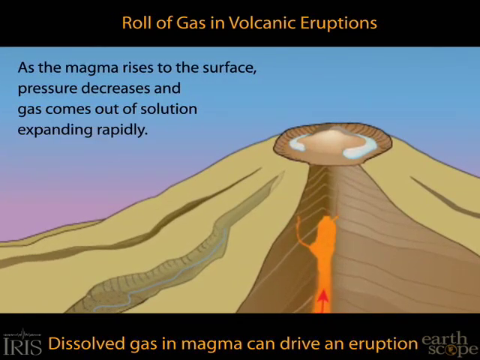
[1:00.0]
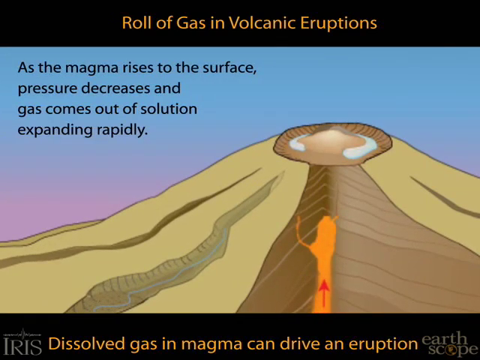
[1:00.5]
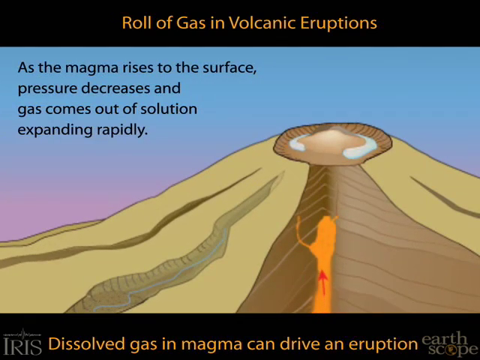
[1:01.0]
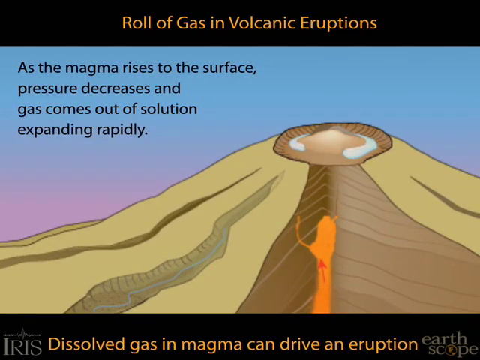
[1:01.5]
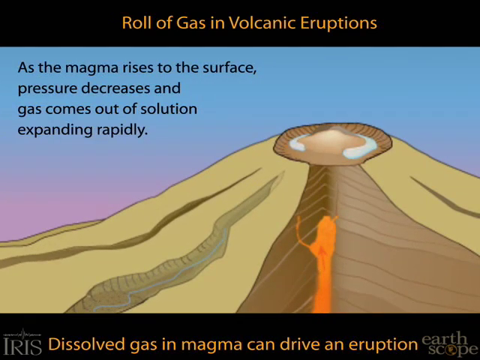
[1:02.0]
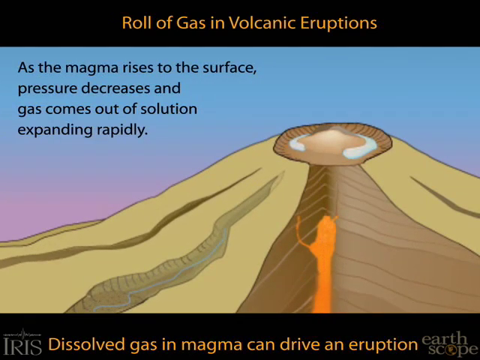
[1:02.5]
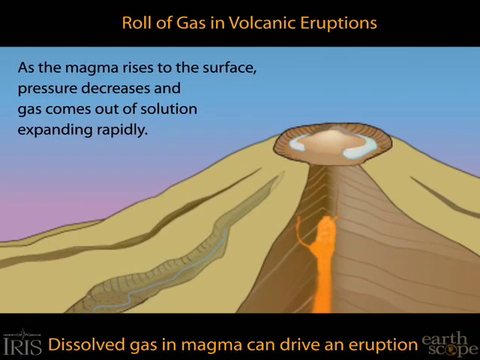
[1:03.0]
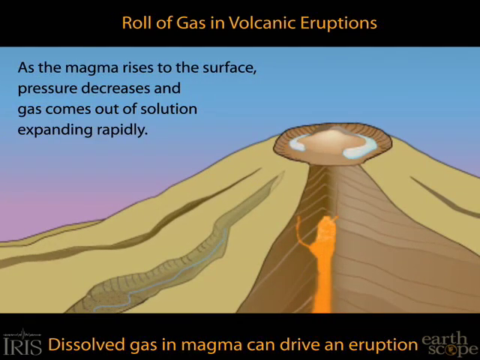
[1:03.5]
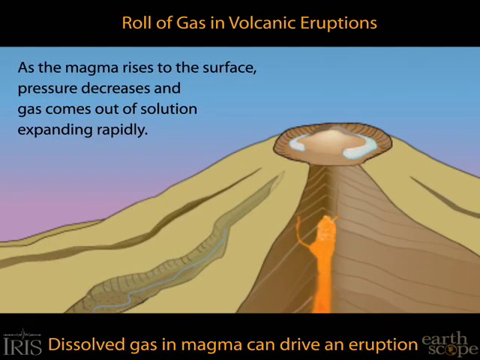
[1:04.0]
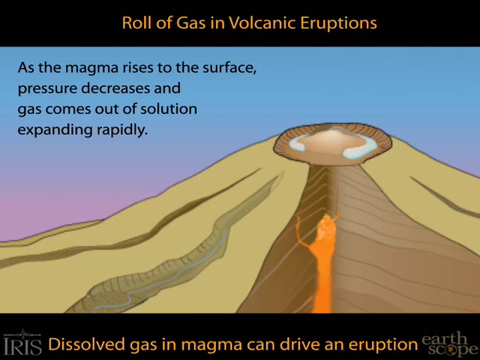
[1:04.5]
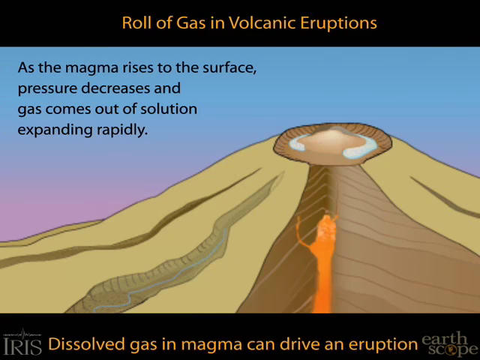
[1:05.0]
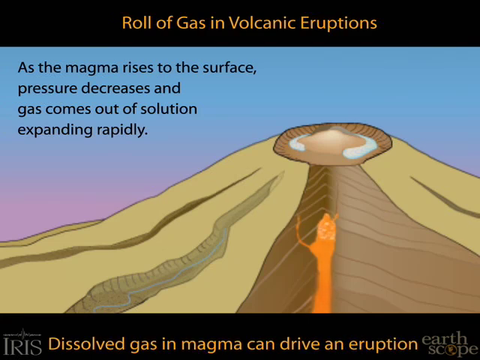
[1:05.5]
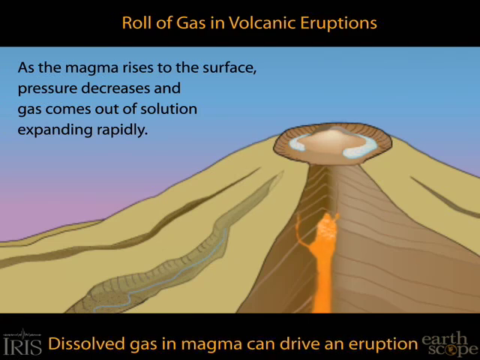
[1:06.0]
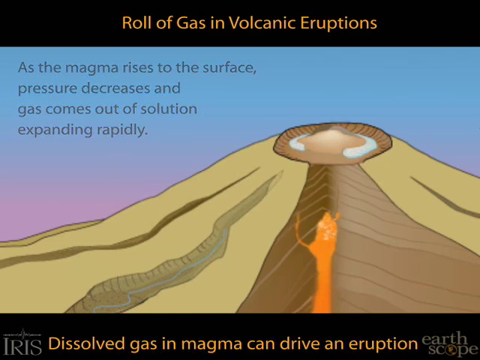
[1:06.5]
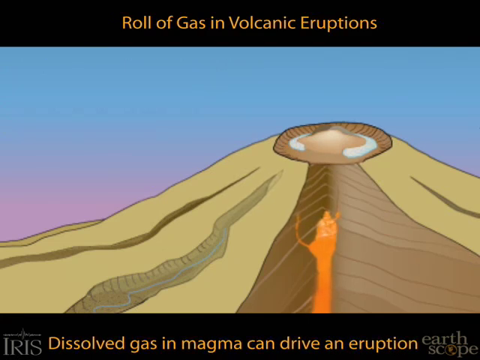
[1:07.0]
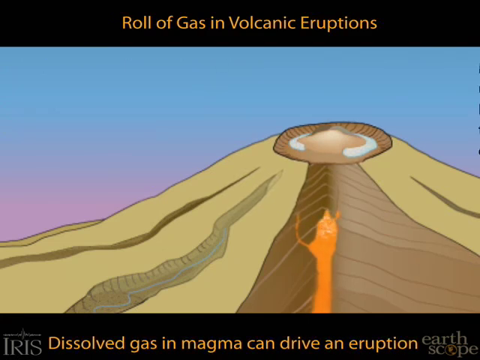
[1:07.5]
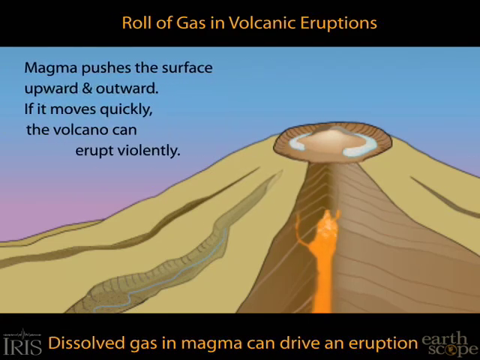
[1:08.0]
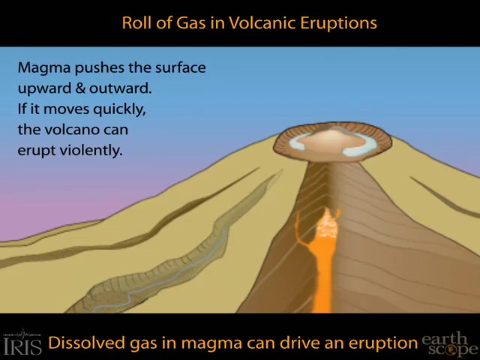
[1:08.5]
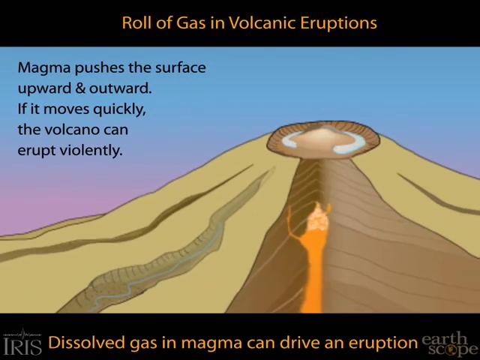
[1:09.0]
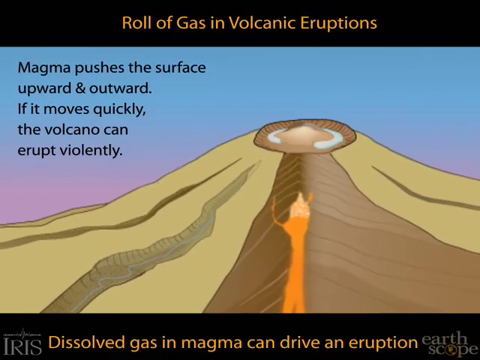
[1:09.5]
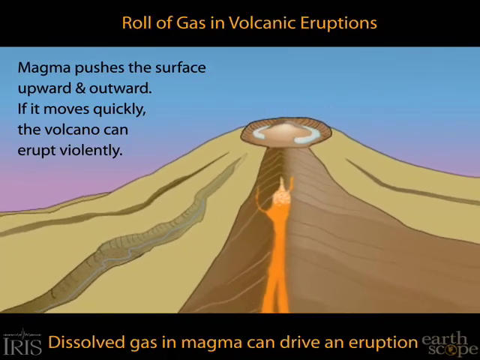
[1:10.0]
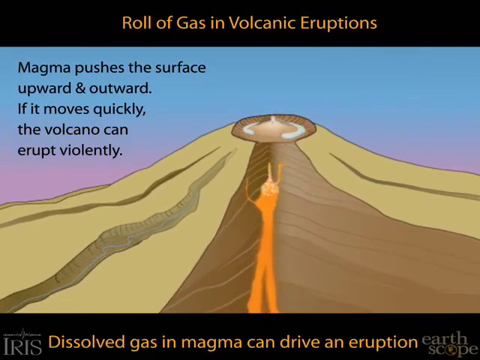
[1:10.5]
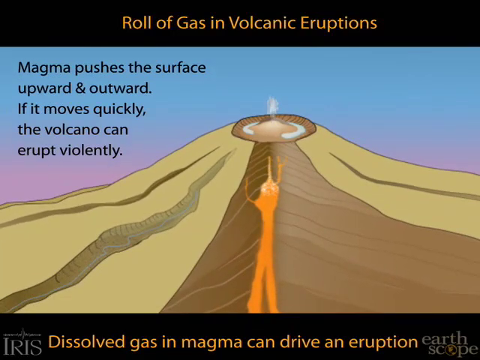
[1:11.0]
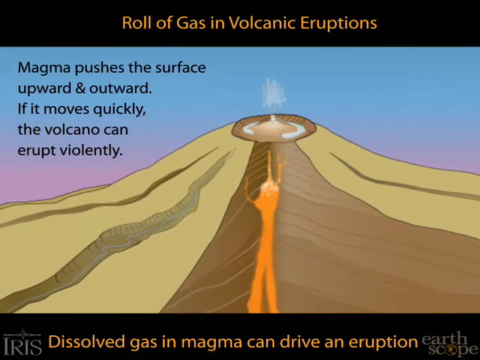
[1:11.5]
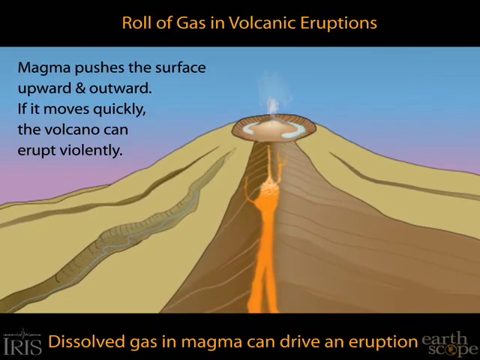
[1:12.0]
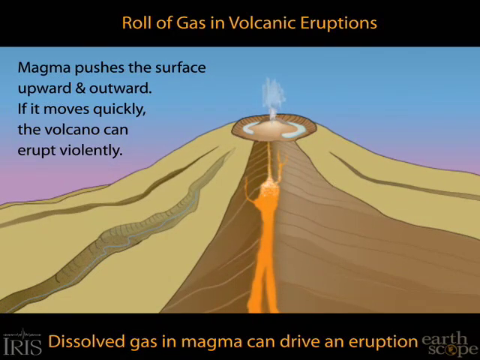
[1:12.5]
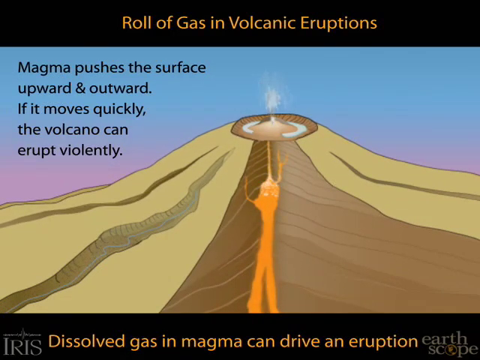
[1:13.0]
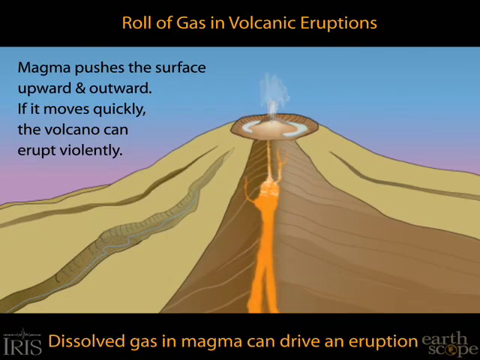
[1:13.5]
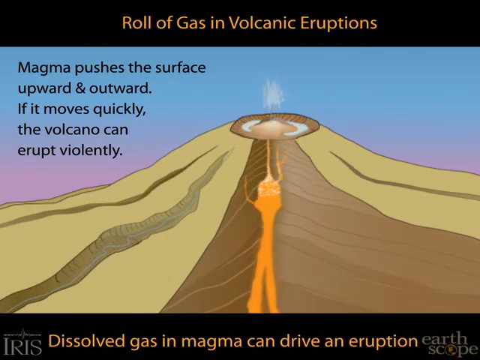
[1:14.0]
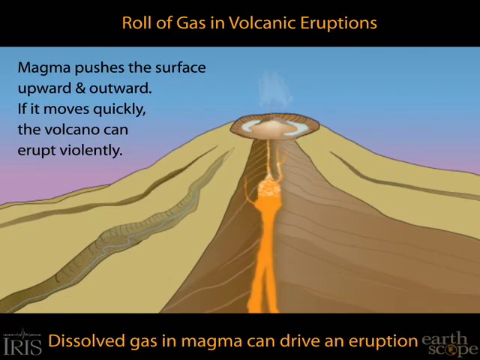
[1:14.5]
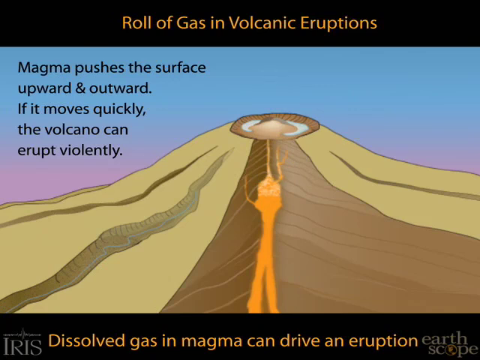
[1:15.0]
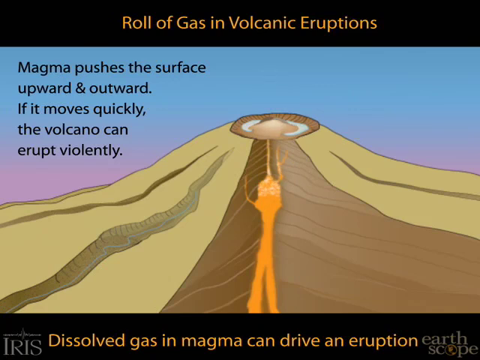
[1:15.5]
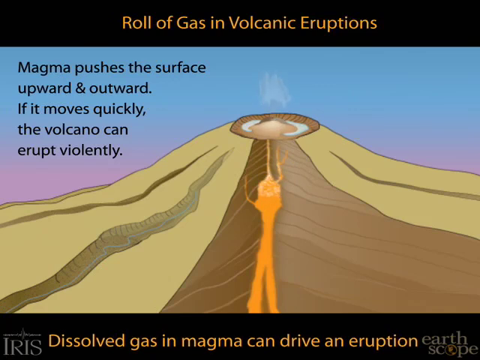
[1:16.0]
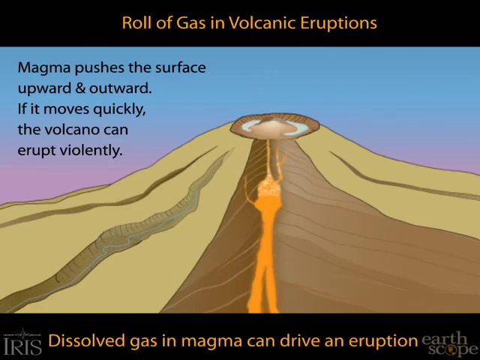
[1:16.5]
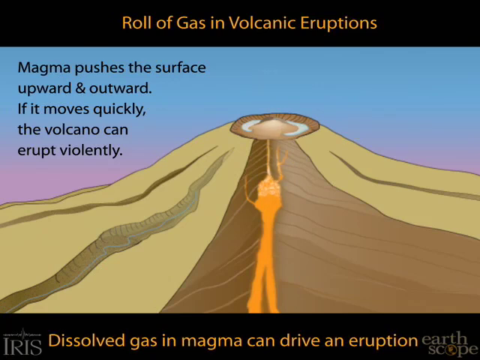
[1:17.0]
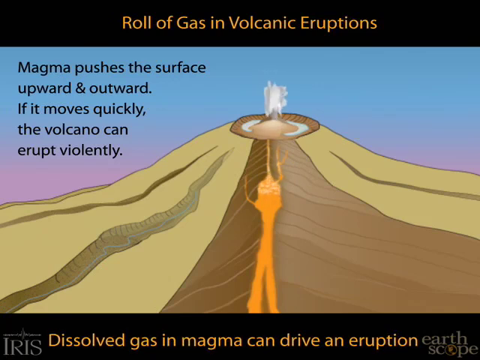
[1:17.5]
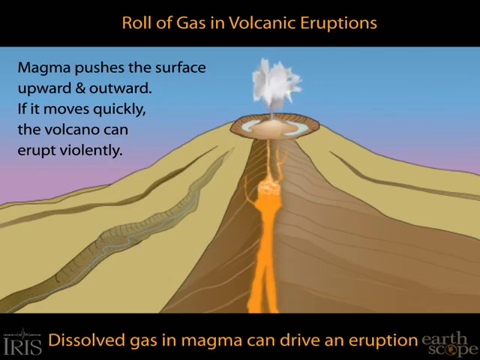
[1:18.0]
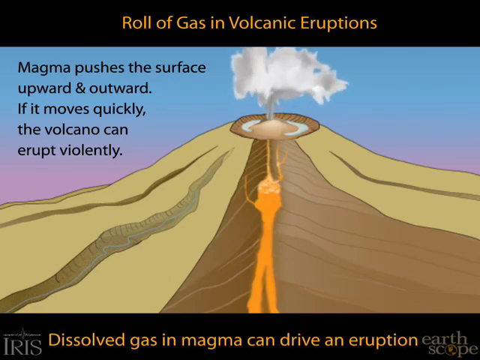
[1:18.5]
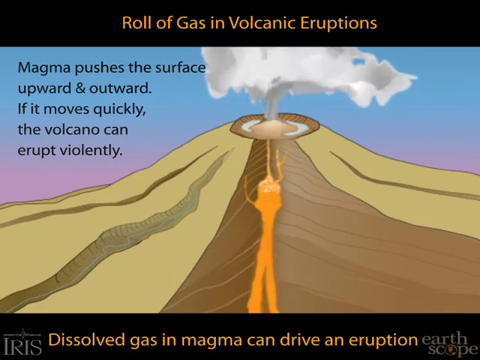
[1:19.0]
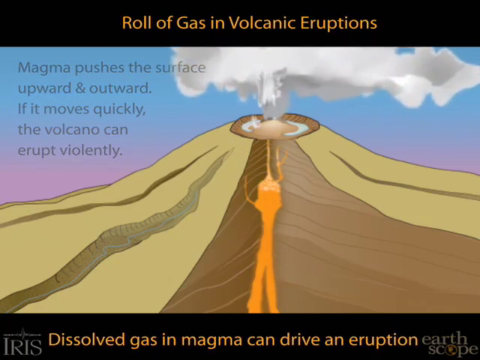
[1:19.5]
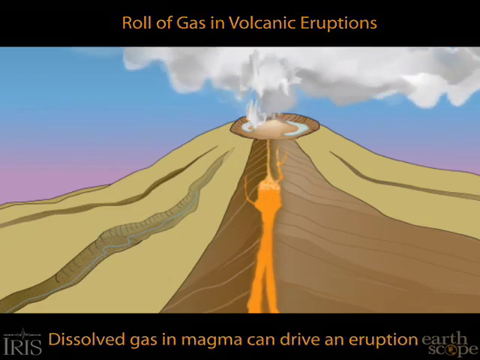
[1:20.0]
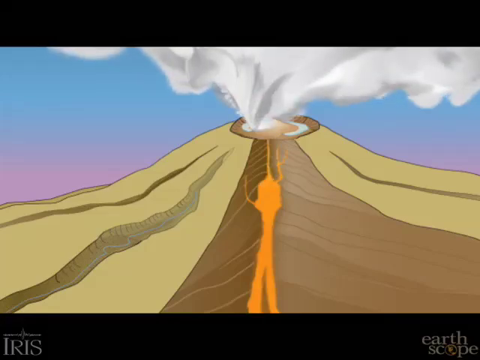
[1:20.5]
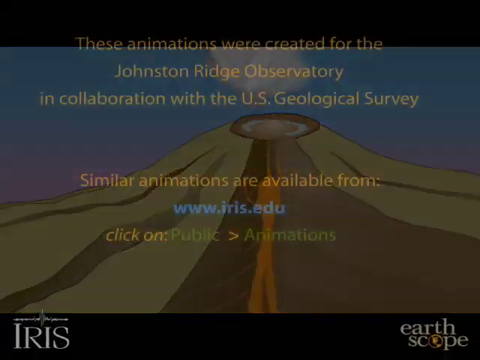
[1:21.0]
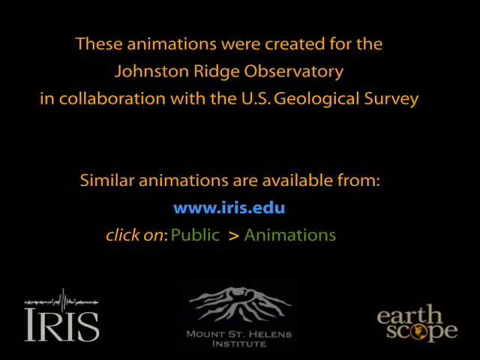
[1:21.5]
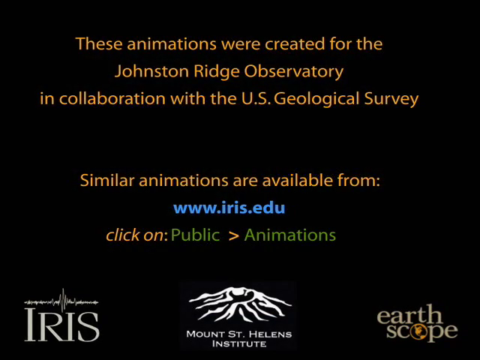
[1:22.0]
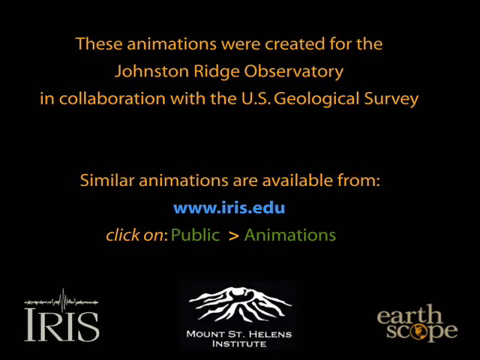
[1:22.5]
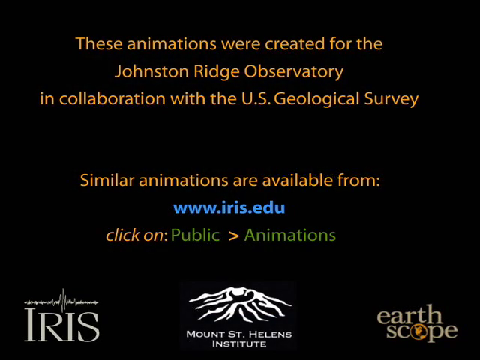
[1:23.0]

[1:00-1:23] An animated, enclosed volcano is drawn in an outdoor location. It has a closed top and is a relatively flat mountain with a lighter brown top layer, a darker brown inner layer, and magma in the middle of its chamber; a section of the volcano is cut away so the magma can be seen. The magma is bright orange, and a red arrow points upward. Text in the sky reads "as the magma rises to the surface pressure decreases and gas comes out solution expanding rapidly." The arrow travels upward and bubbles appear at the top of the magma chamber. The camera pans outward to show the magma pushing upward and outward toward the surface, and a plume starts coming out of the top of the volcano, growing larger and larger until it looks like a large cloud. A closing scene states that the animations were created for the Johnston Ridge Observatory in collaboration with the U.S. Geological Survey, with the logo at the bottom.